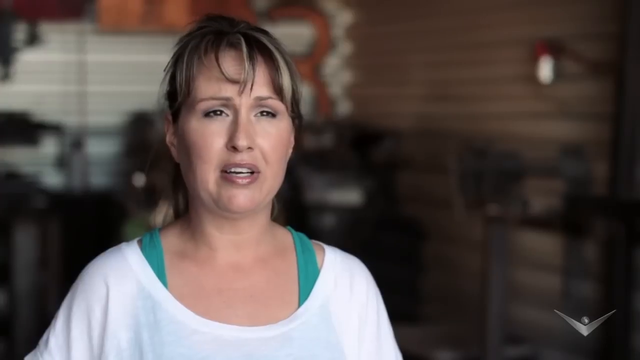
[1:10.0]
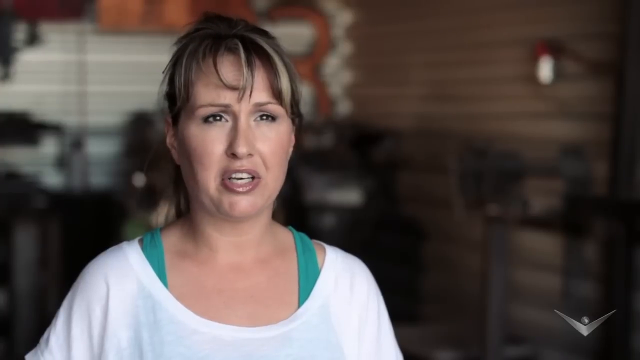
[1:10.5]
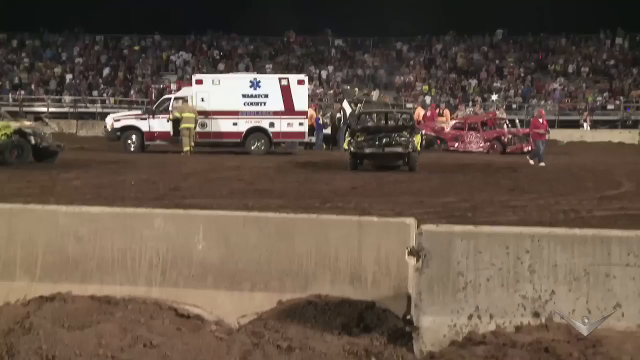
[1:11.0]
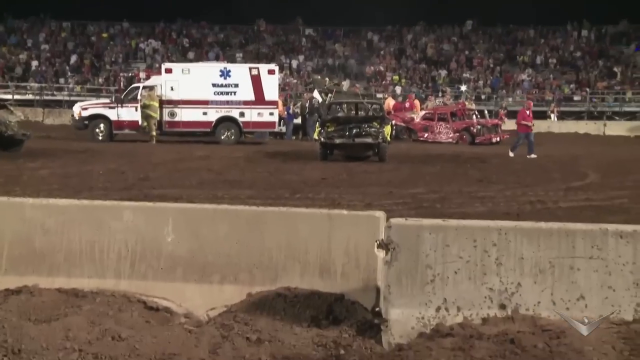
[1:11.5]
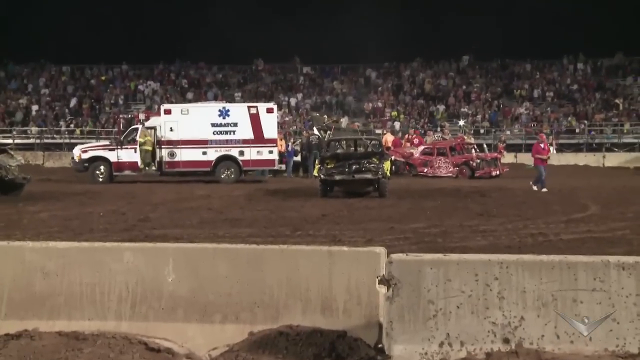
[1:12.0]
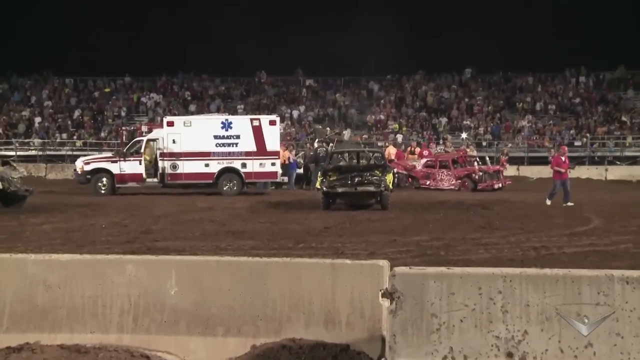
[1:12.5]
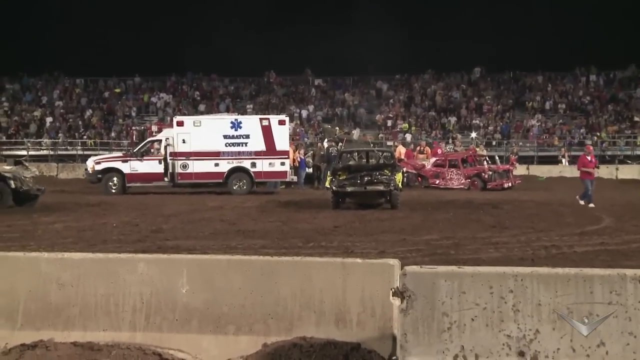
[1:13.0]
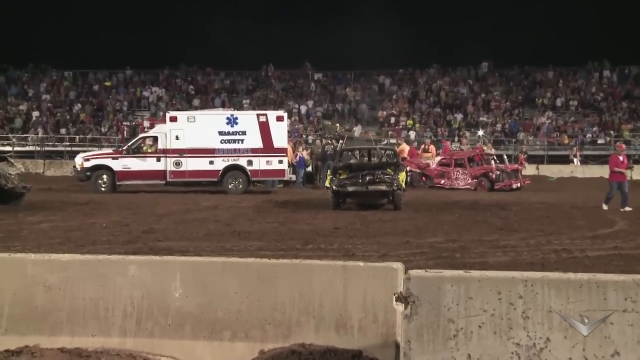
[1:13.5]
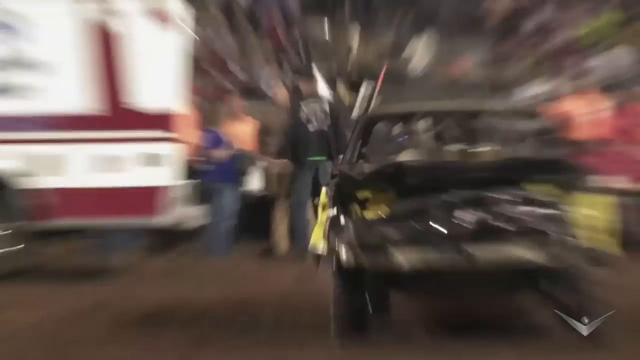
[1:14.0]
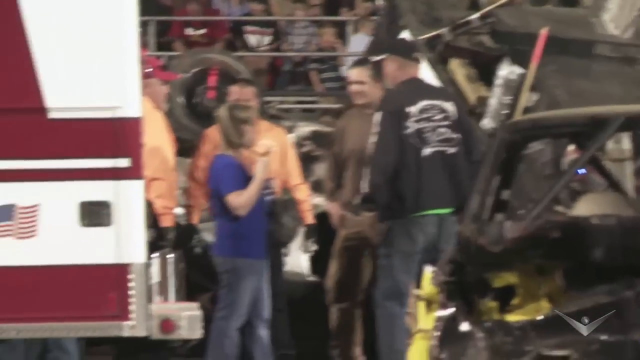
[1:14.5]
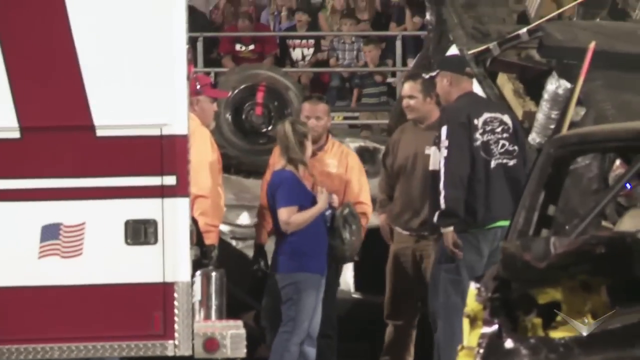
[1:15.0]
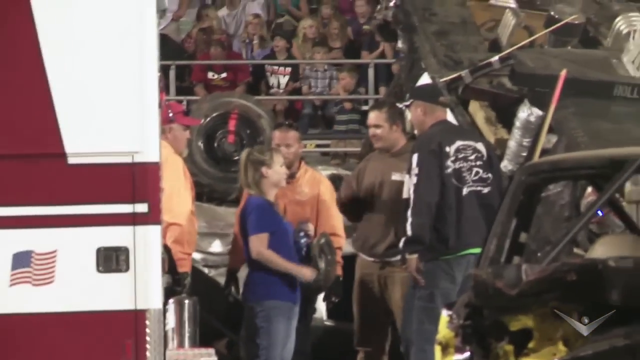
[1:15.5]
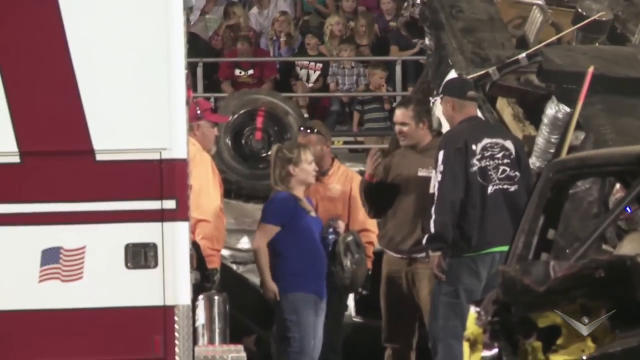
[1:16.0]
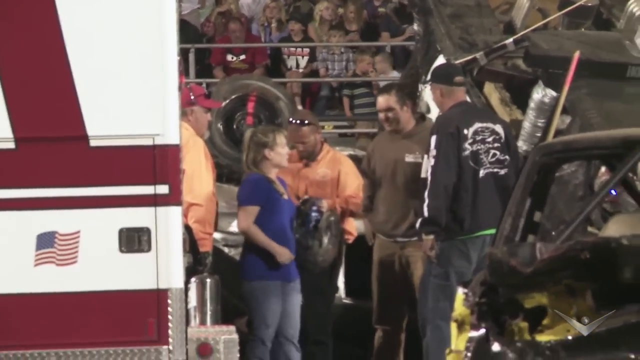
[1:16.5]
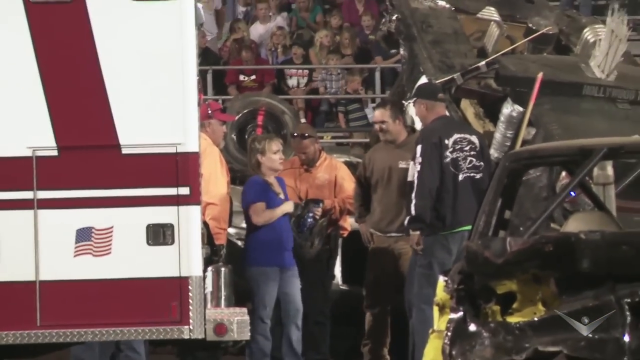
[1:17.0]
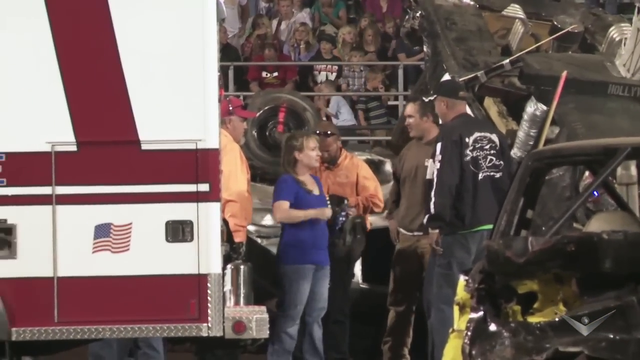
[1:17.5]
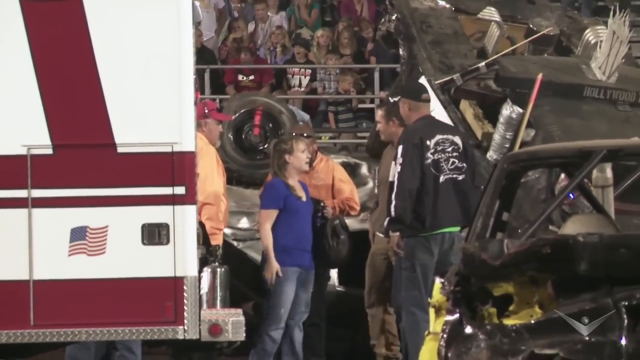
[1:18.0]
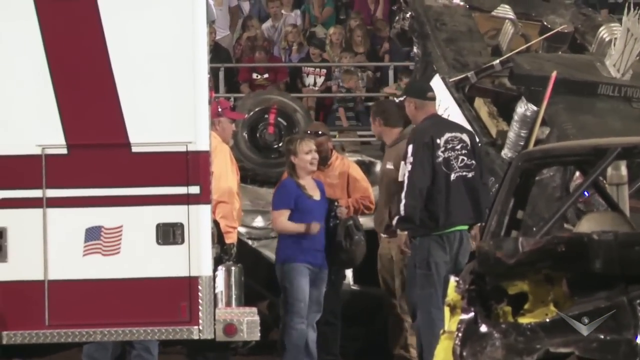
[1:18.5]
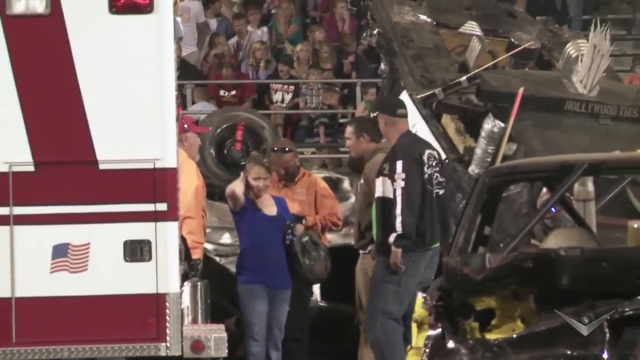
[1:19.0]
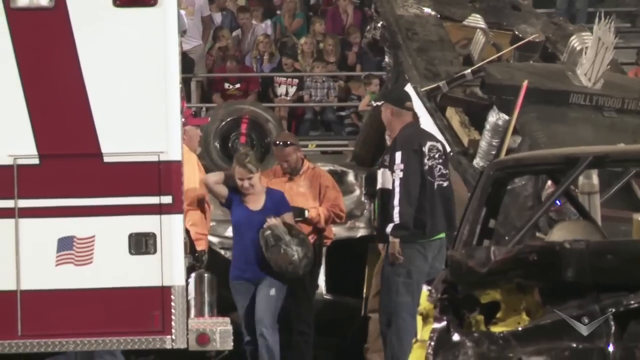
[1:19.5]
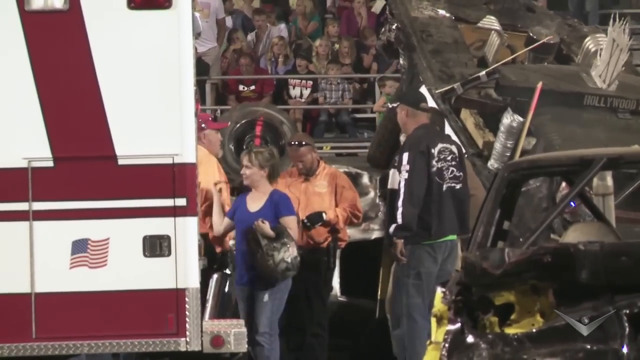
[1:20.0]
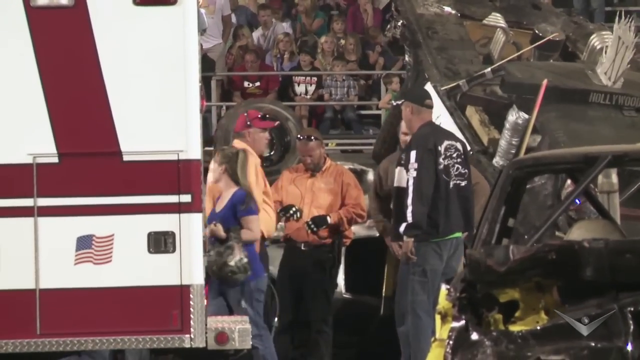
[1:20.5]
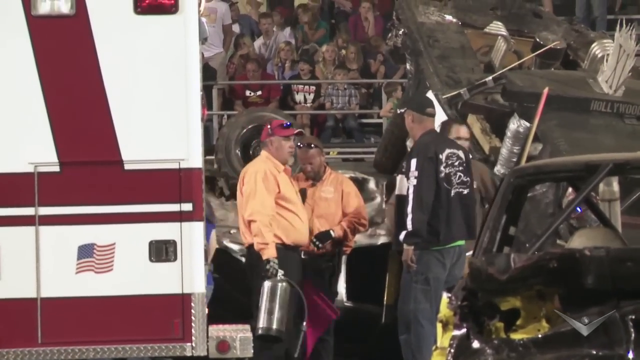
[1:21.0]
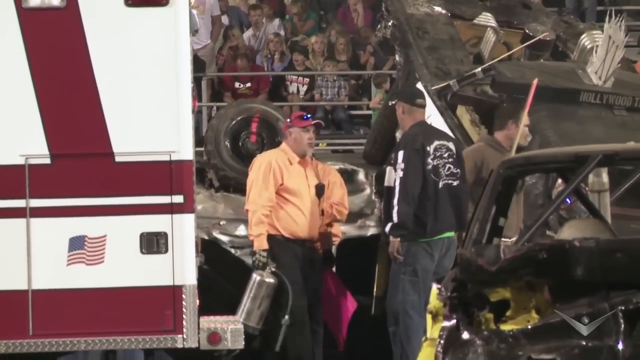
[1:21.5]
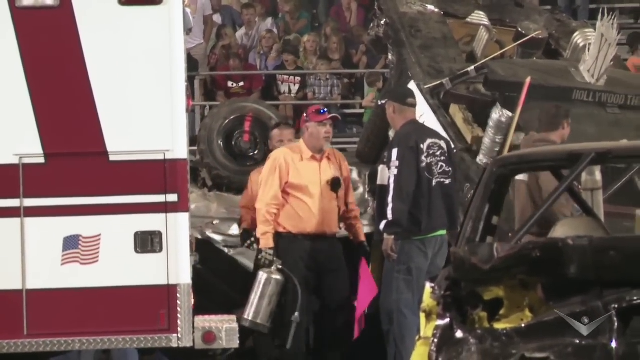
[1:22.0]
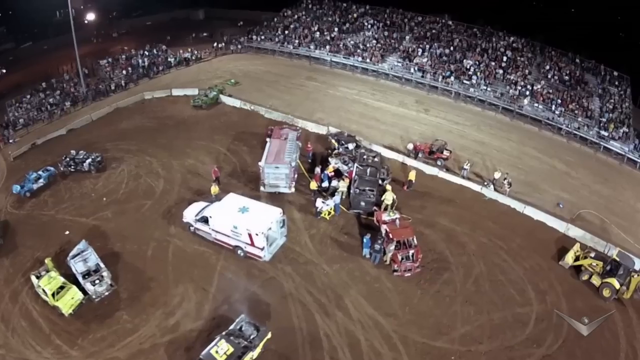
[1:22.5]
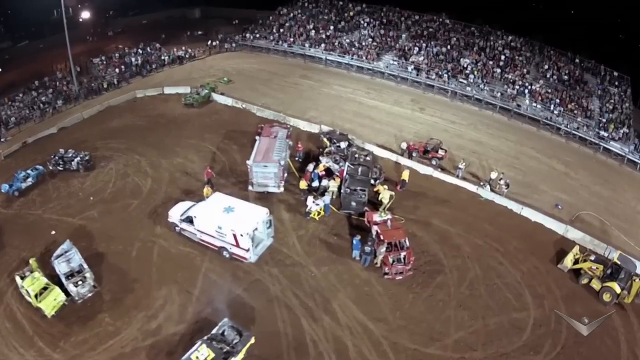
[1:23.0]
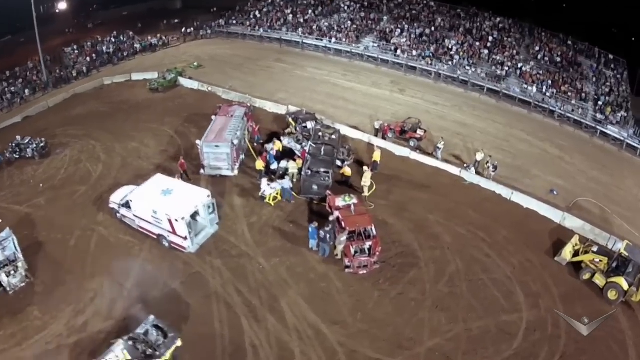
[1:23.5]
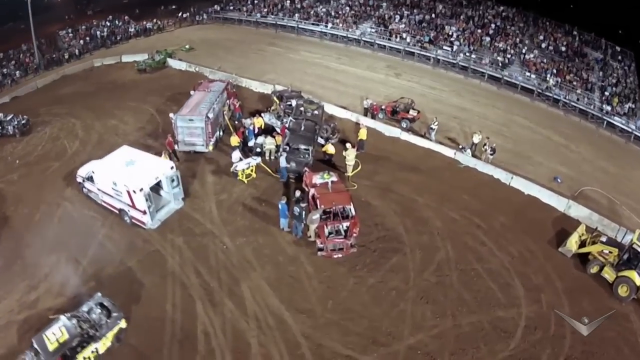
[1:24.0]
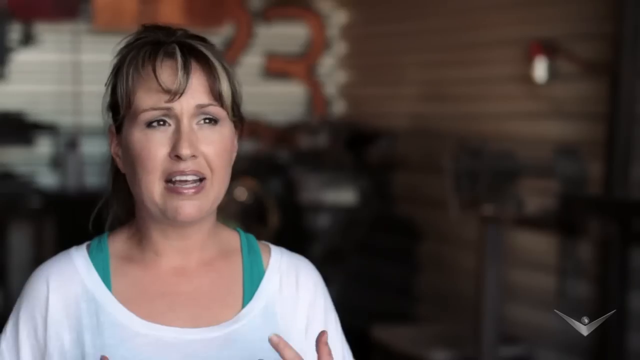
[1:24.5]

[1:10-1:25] A middle-aged white woman in a white shirt with a turquoise tank top underneath is speaking. The video cuts back to footage of an ambulance, with paramedics and EMTs trying to get the driver, whose car was overturned, out and into the ambulance. A white woman with blonde hair, a blue shirt and blue jeans seems very upset and emotional; she is possibly family or the partner of the driver who was crashed into. Firefighters are at the scene along with the ambulance, and it looks like they have not yet packed up to go as everybody is shown talking. A couple of men in coral shirts look to be part of the same team; the teams seem to wear different colored shirts.